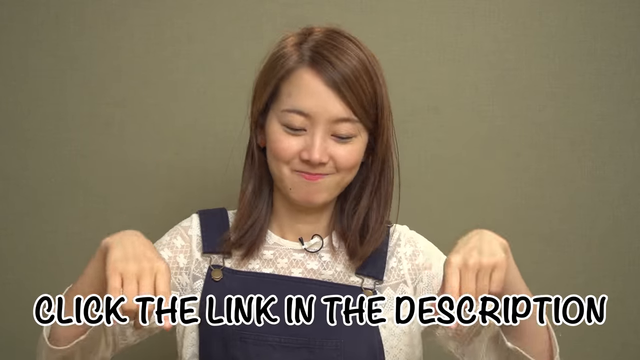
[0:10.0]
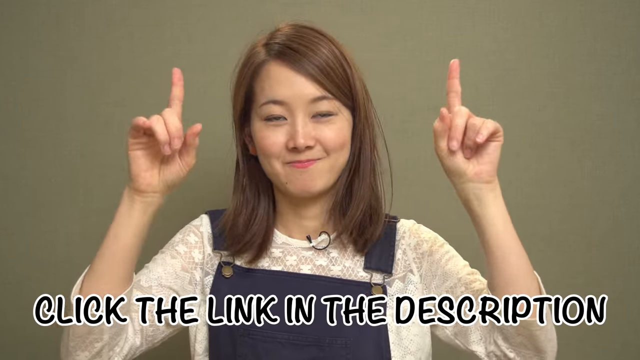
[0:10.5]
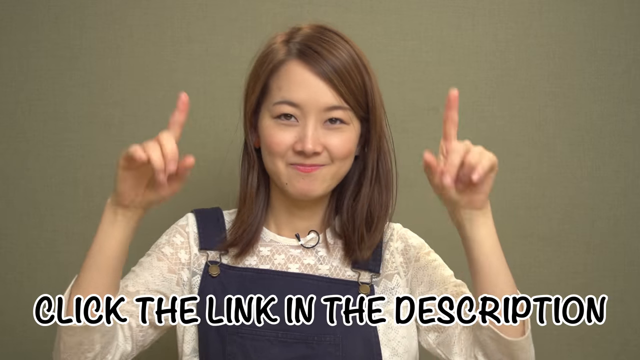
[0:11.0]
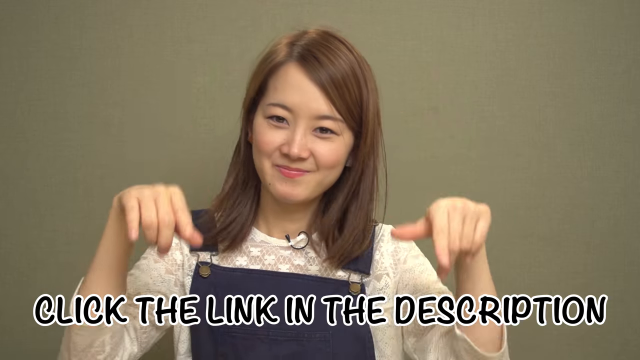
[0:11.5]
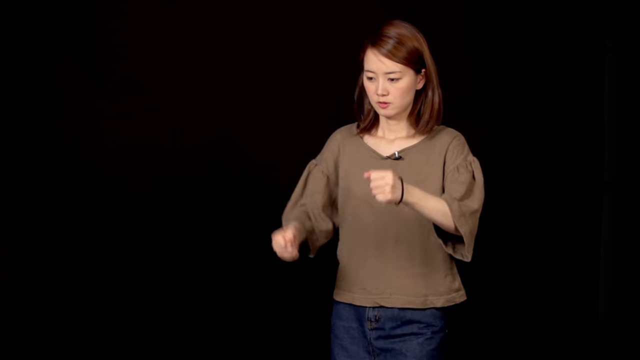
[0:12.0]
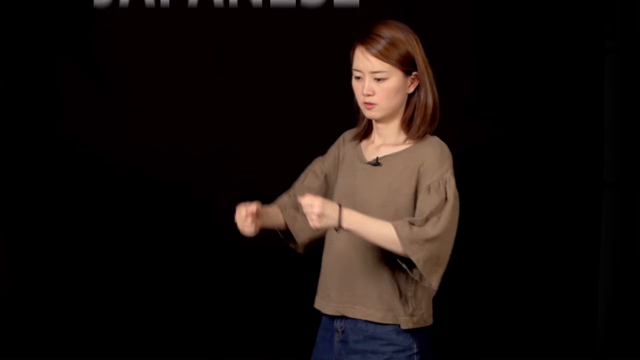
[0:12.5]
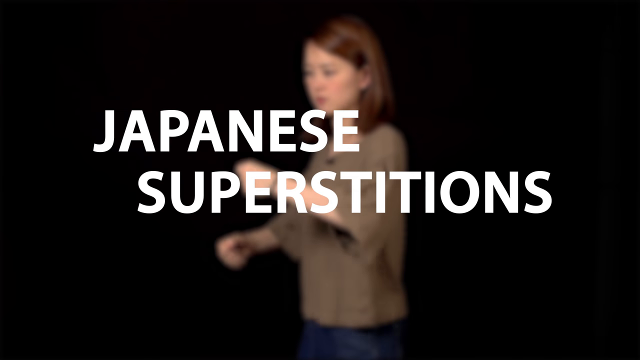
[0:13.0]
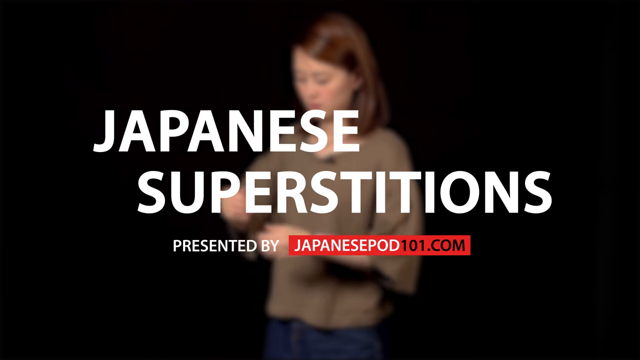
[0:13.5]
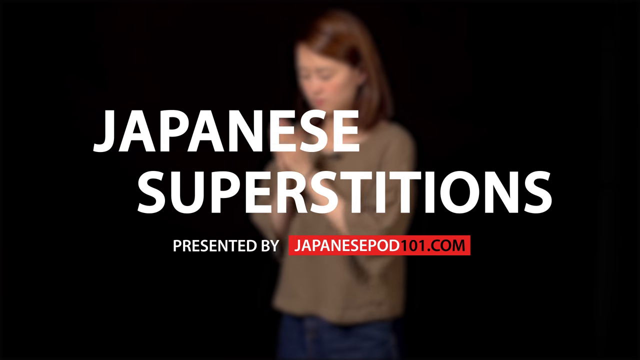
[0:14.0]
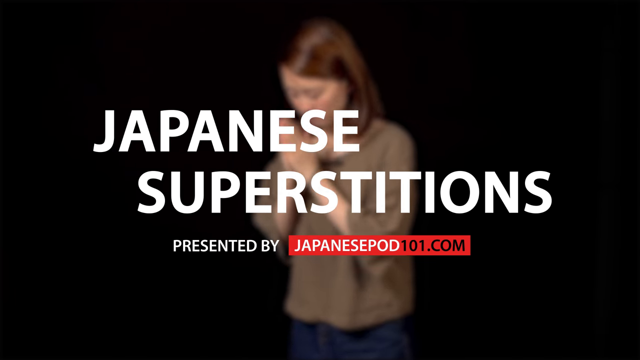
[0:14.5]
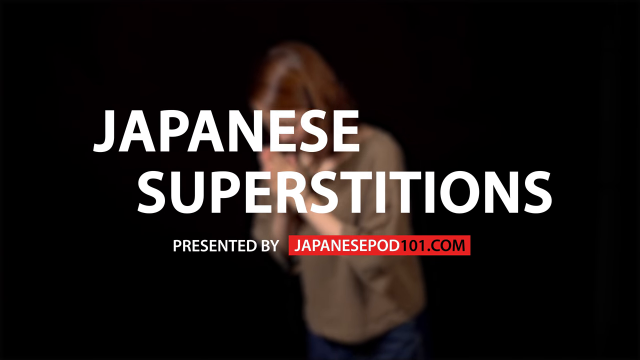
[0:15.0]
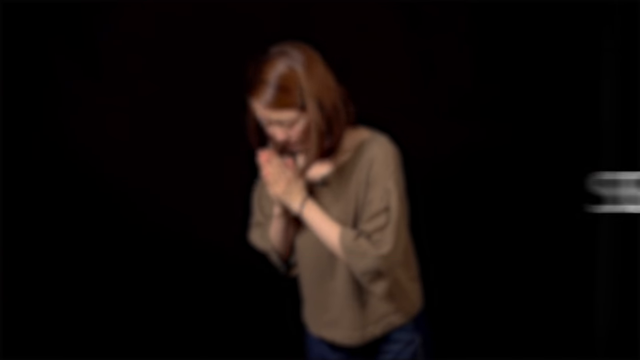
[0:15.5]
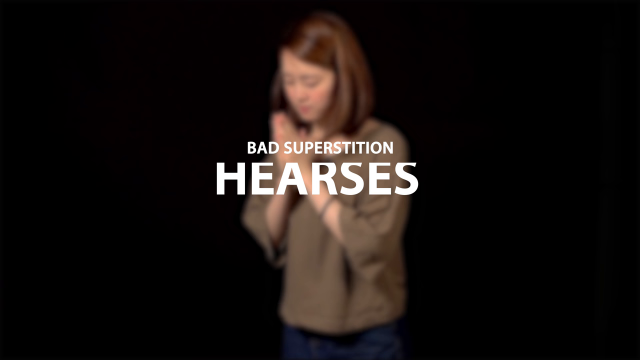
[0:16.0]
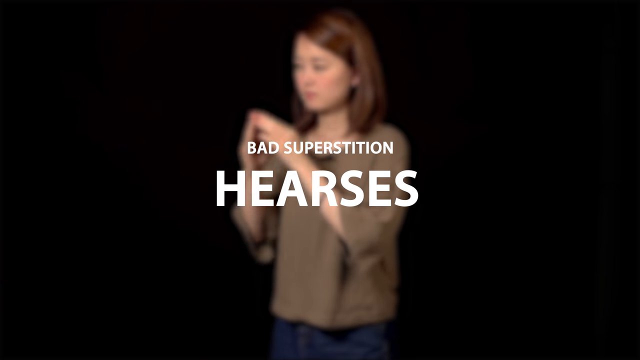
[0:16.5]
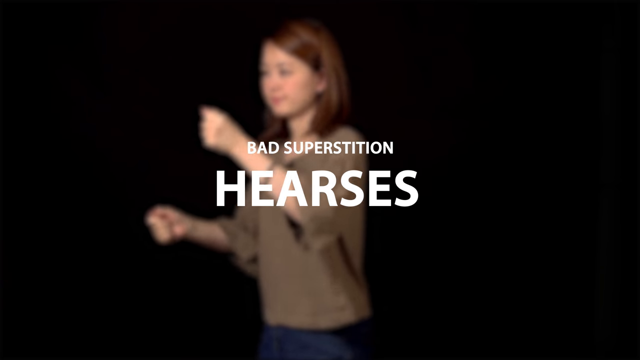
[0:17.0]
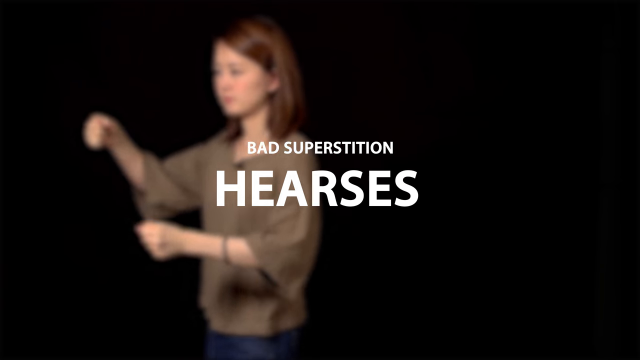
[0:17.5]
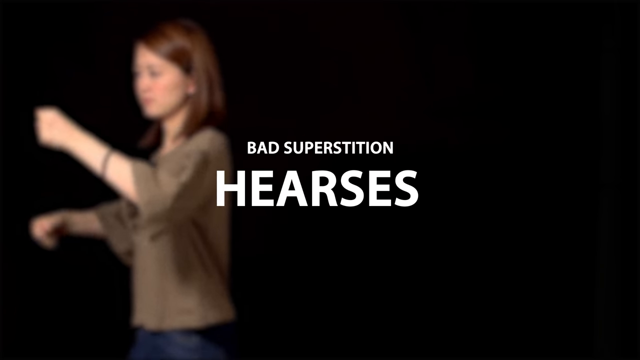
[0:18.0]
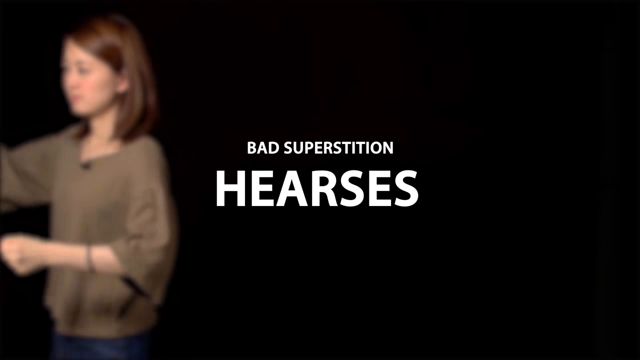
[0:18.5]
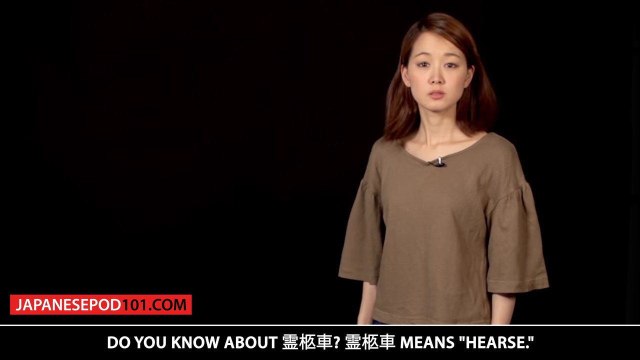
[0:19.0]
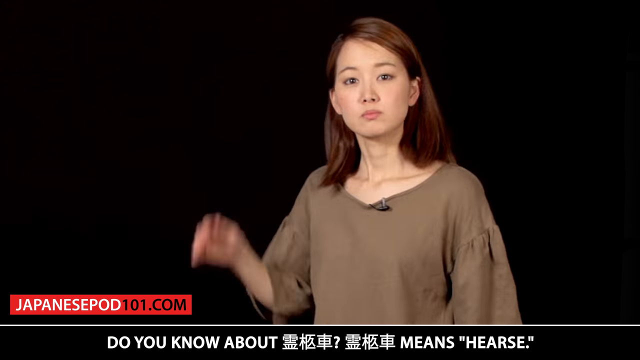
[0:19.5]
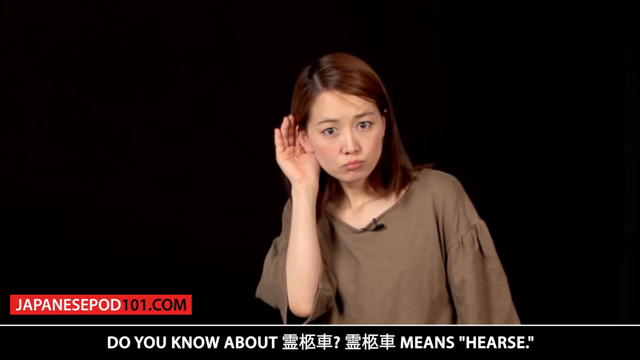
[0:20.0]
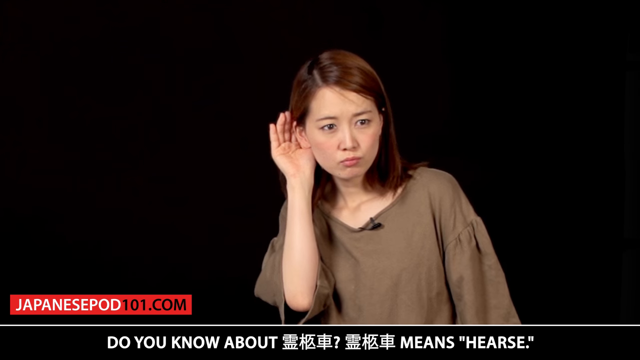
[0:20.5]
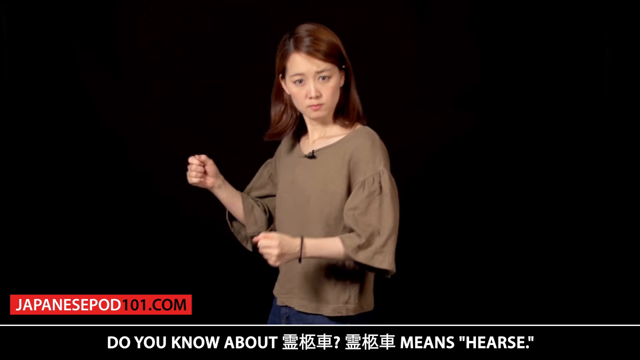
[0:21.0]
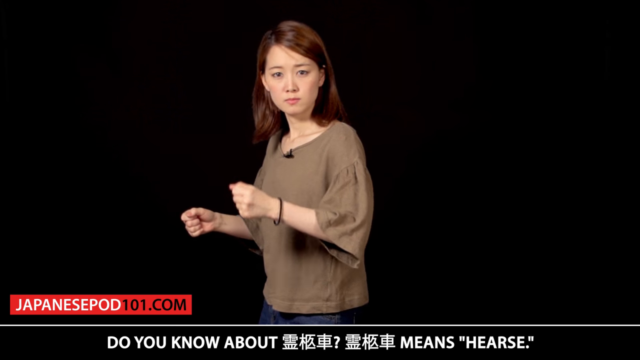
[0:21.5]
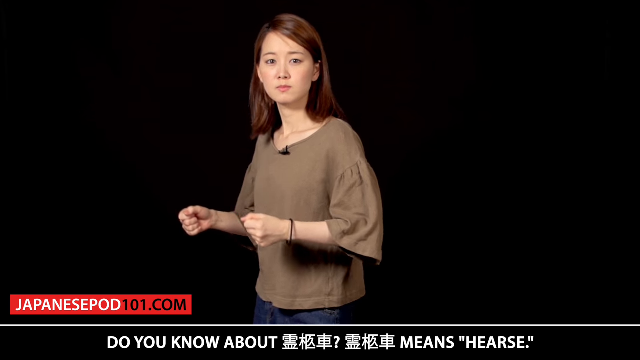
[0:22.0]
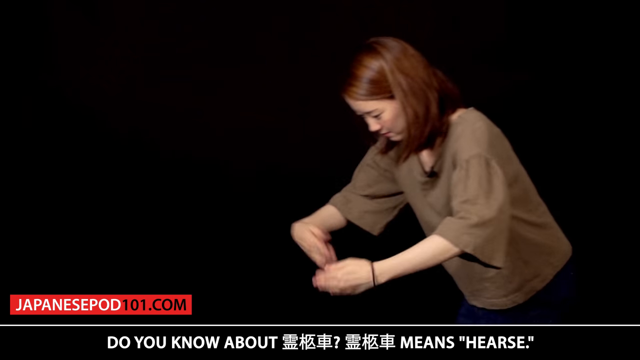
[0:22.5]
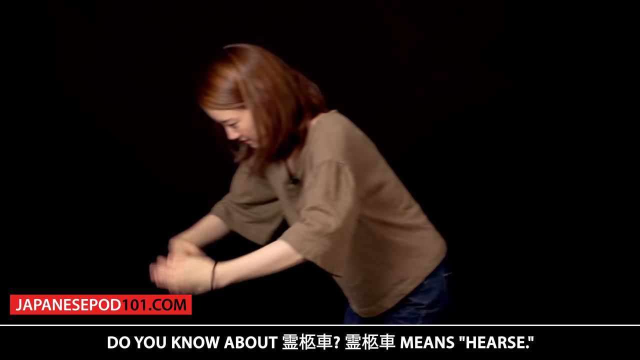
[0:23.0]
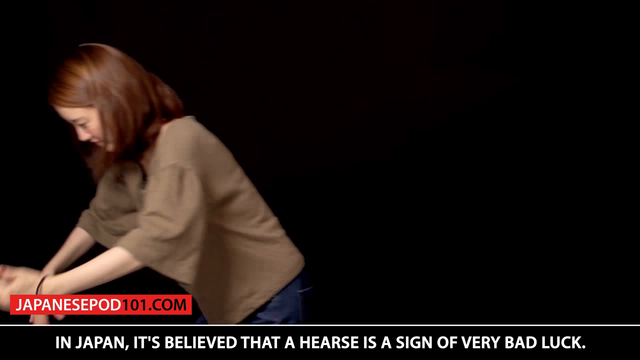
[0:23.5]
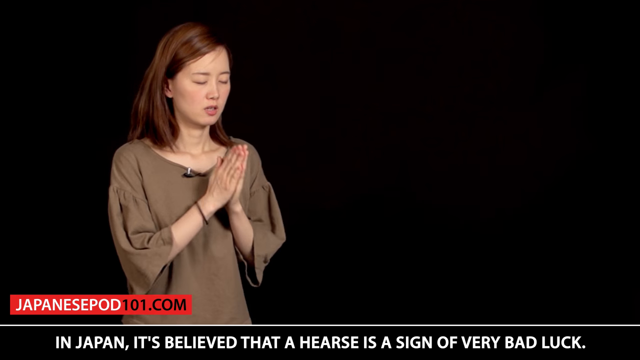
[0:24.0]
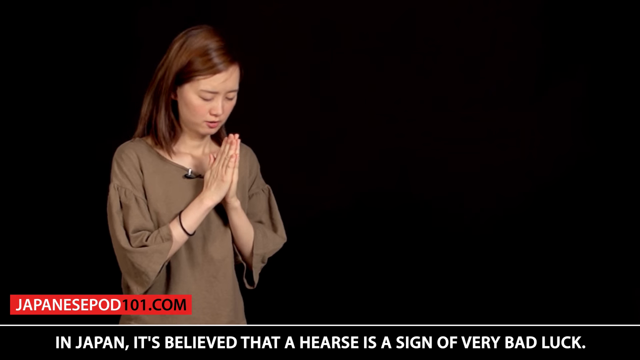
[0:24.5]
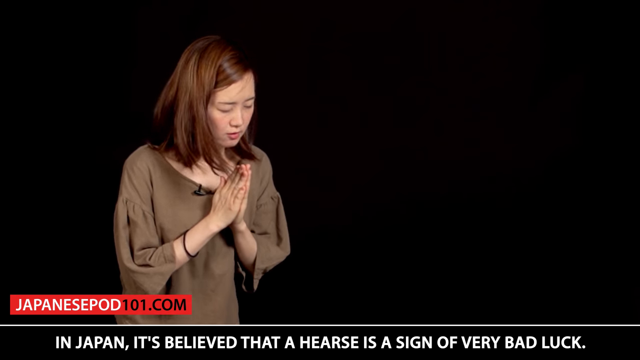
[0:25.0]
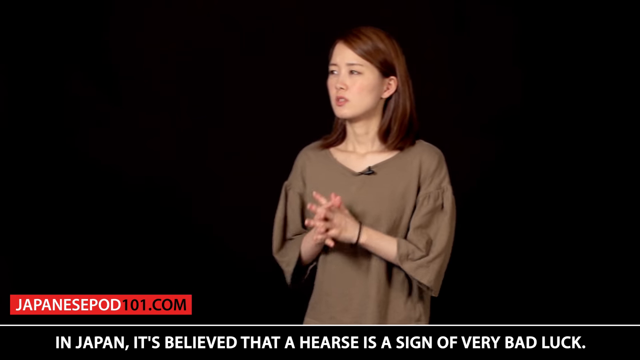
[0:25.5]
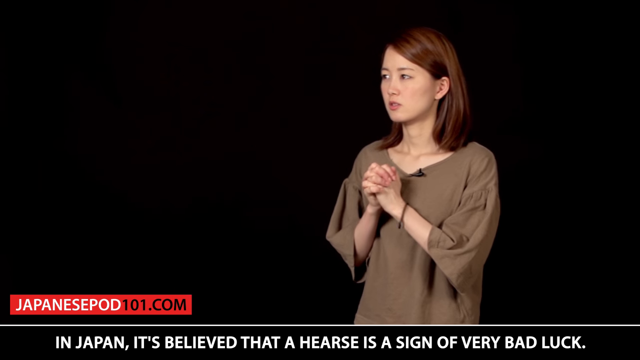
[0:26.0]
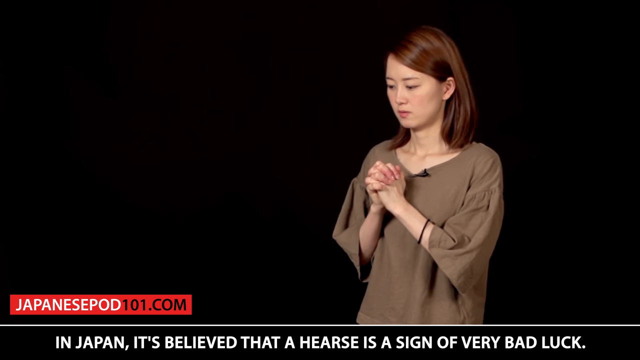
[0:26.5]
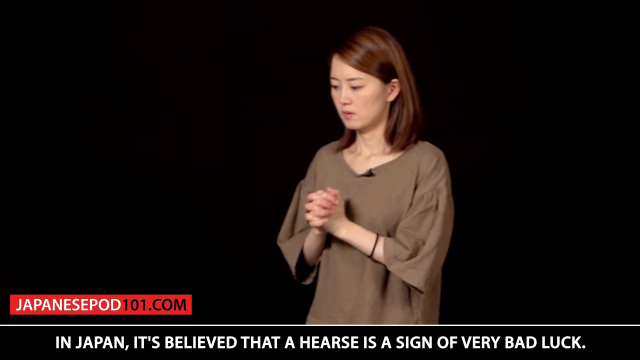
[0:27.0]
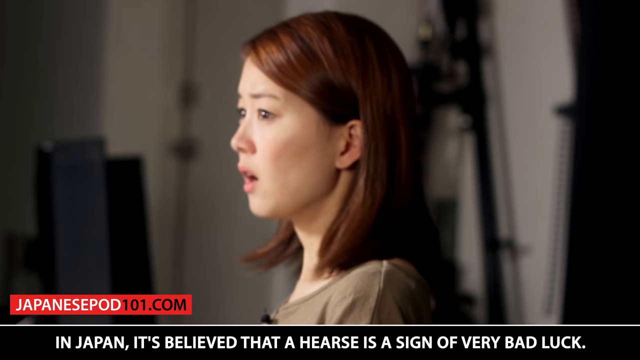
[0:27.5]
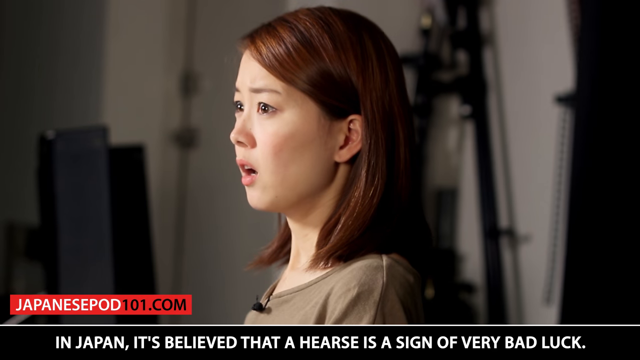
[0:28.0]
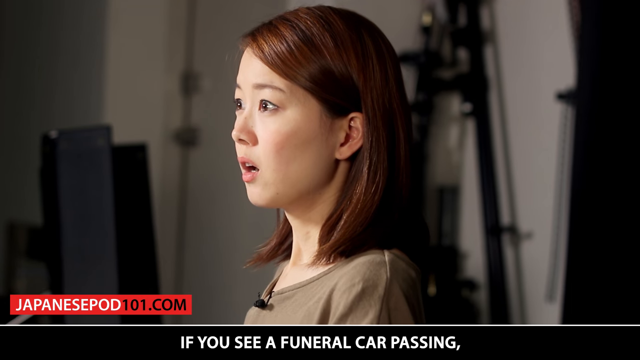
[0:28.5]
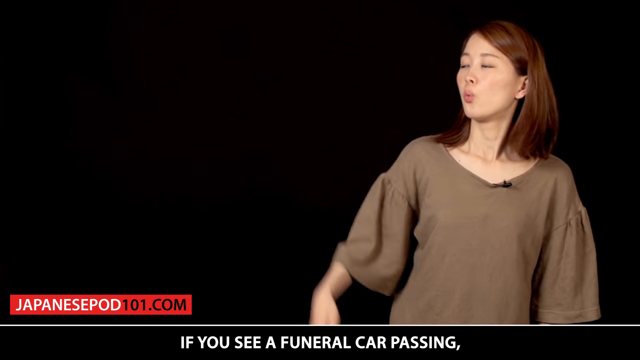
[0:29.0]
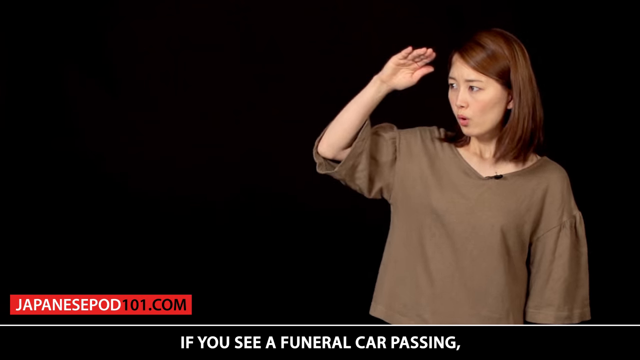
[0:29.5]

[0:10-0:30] The Asian woman points with her fingers at the text "click the link in the description". She has brown hair, dark eyes and lipstick on her lips. On the next slide she is apparently dancing, this time wearing a brown t-shirt. Text reads "the japanese superstitions presented by japanesepod101.com". The woman, on a dark background, makes various gestures, seemingly praying to something, walks through the room, and does something that possibly looks like riding in a car.